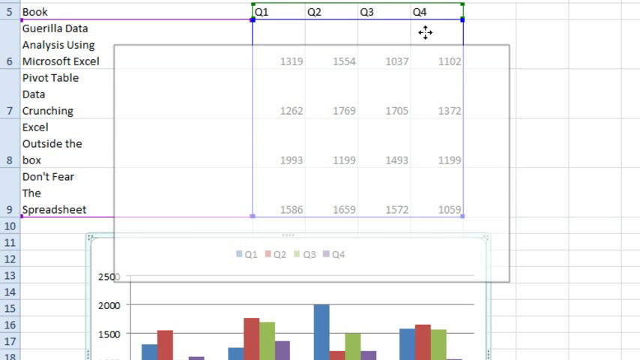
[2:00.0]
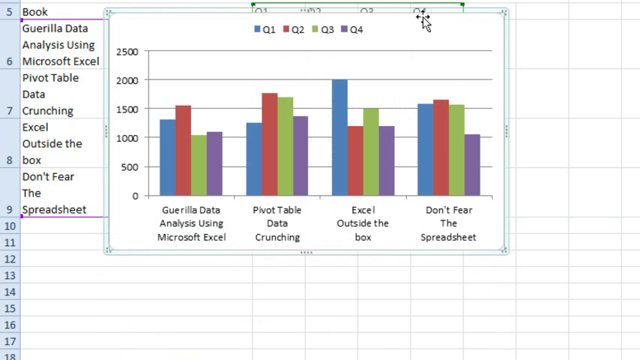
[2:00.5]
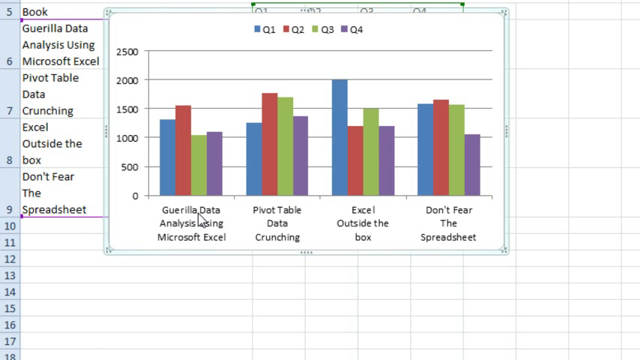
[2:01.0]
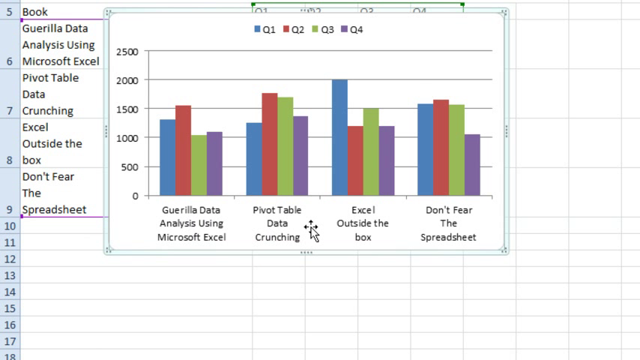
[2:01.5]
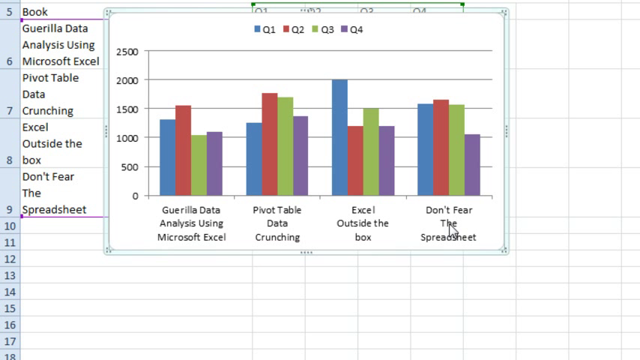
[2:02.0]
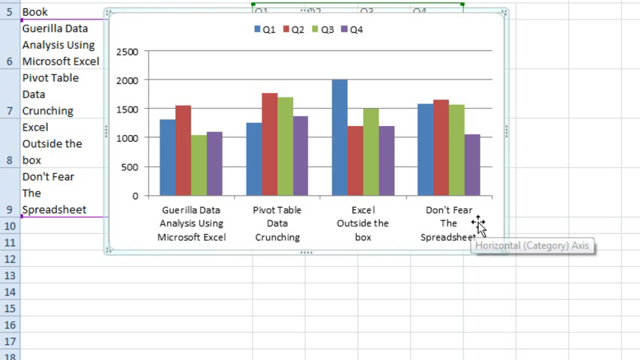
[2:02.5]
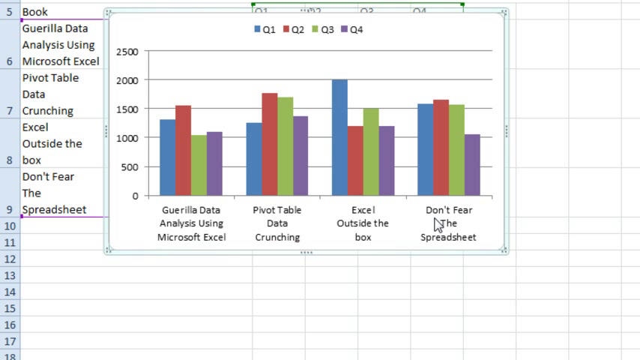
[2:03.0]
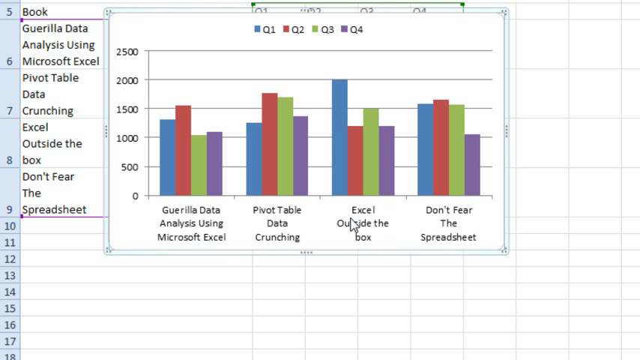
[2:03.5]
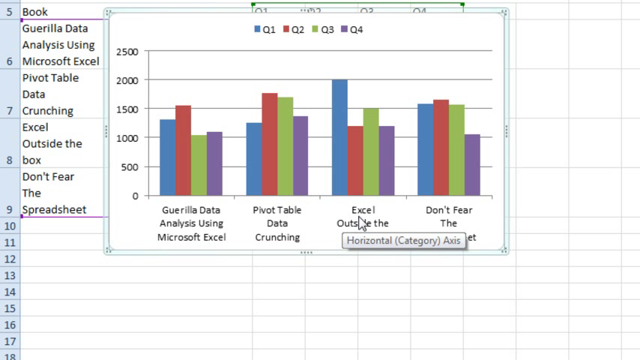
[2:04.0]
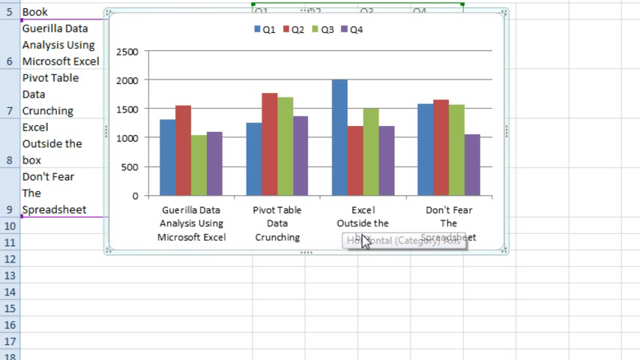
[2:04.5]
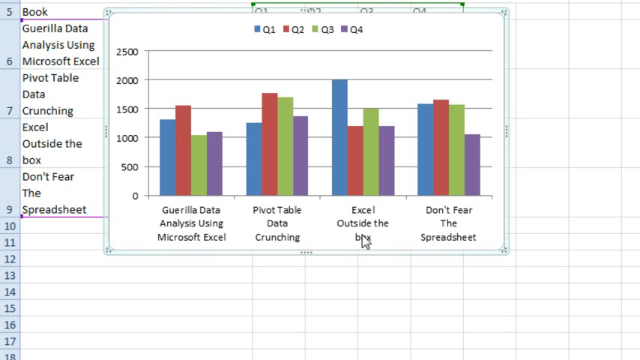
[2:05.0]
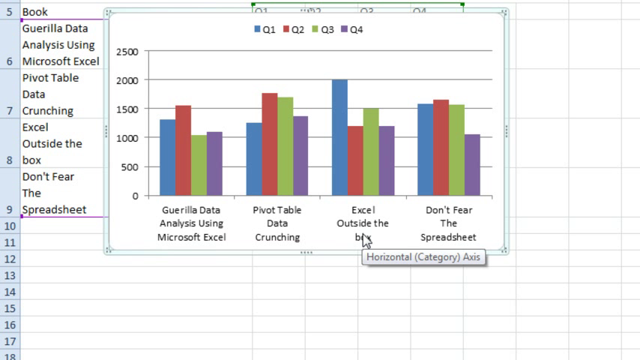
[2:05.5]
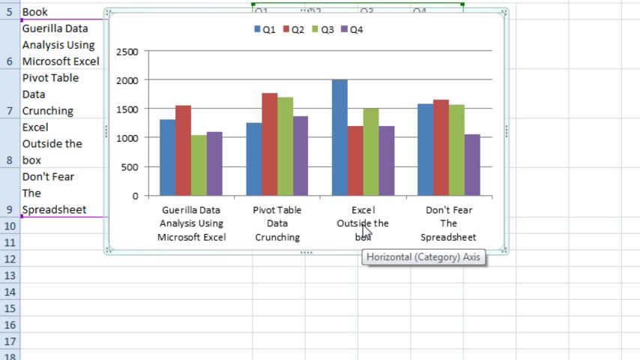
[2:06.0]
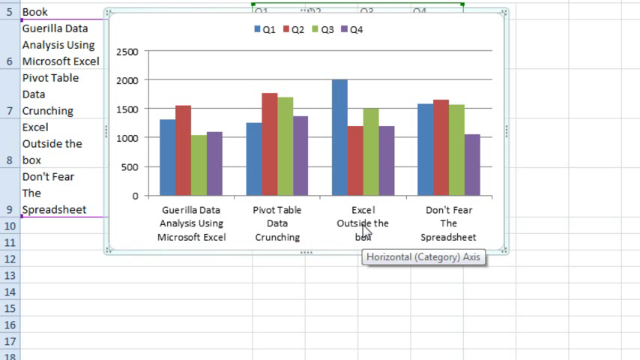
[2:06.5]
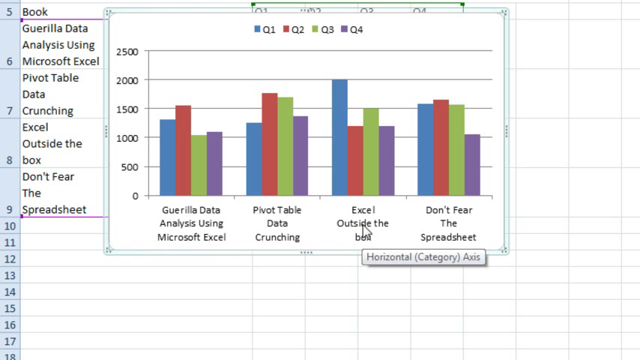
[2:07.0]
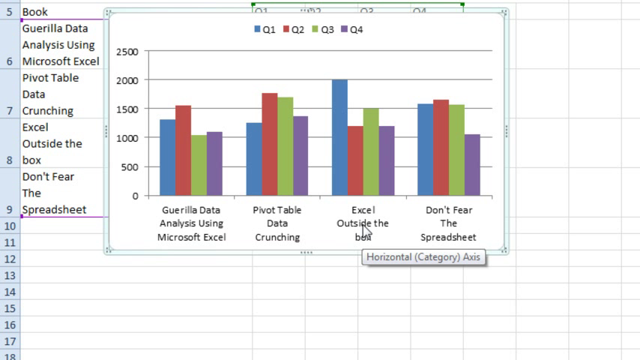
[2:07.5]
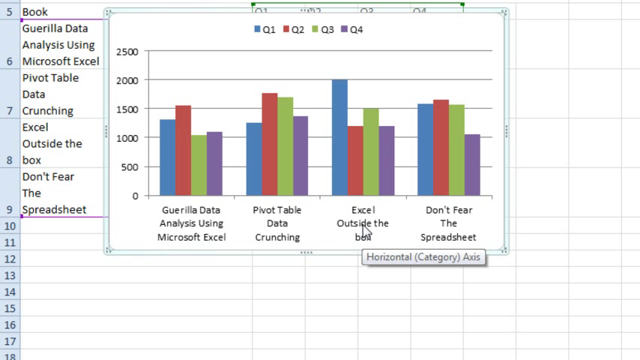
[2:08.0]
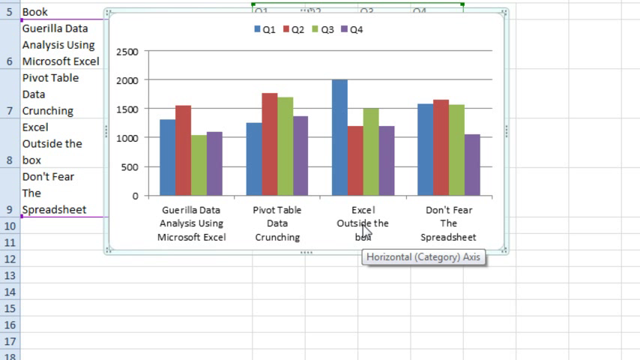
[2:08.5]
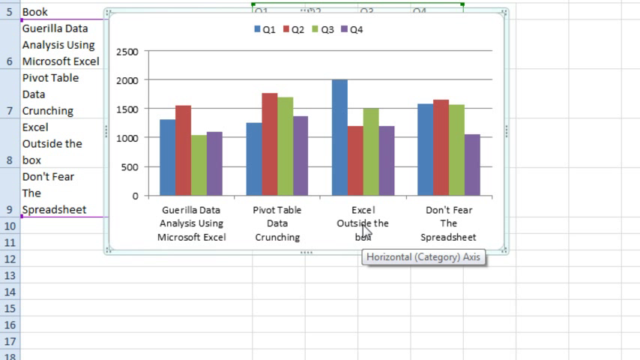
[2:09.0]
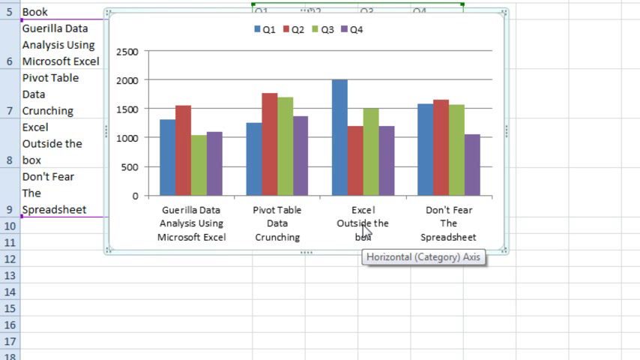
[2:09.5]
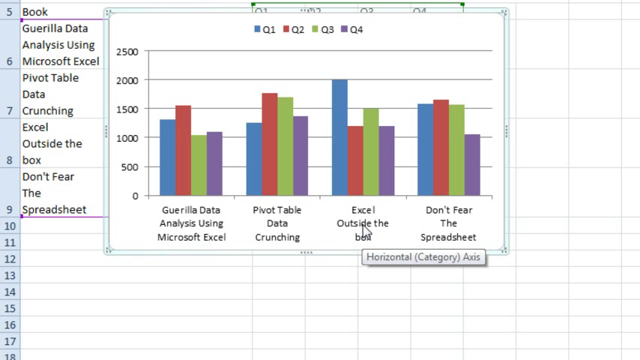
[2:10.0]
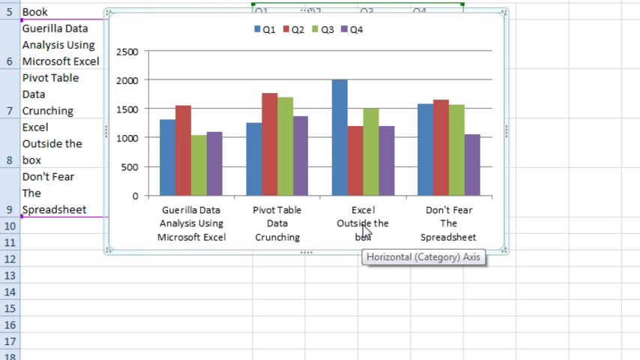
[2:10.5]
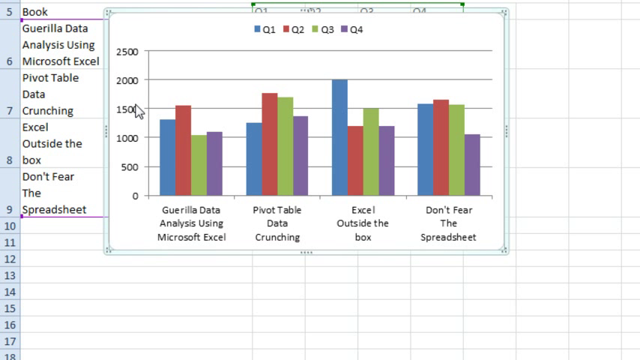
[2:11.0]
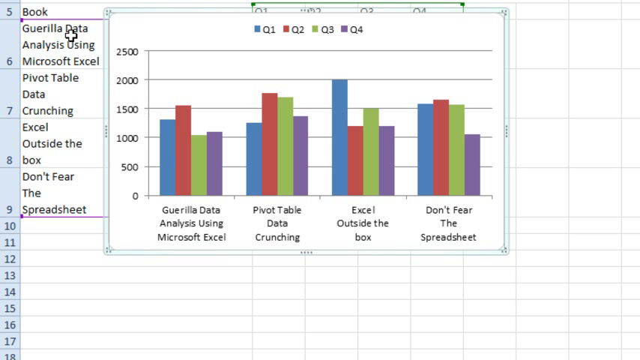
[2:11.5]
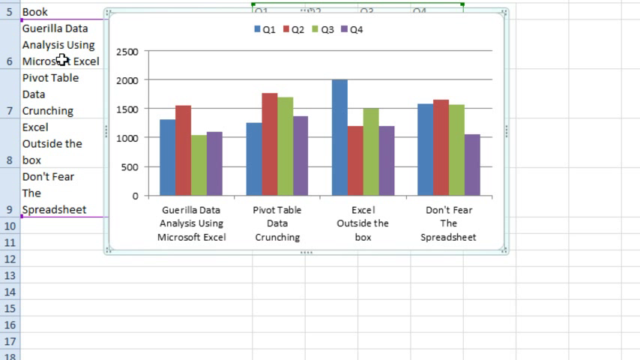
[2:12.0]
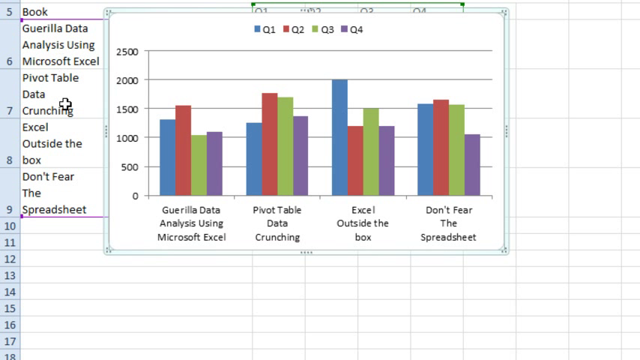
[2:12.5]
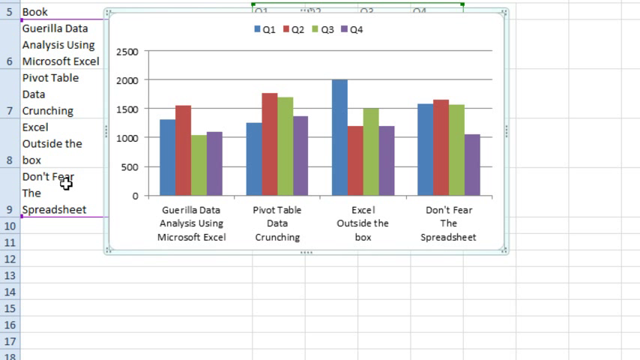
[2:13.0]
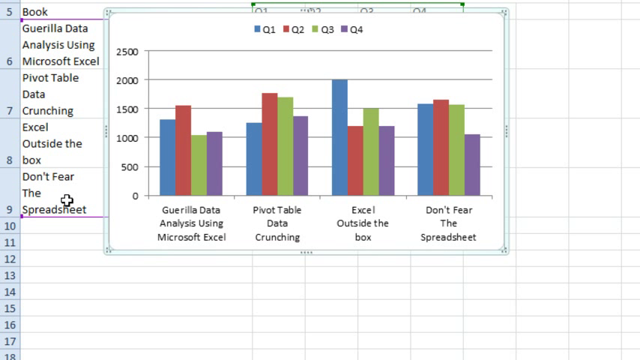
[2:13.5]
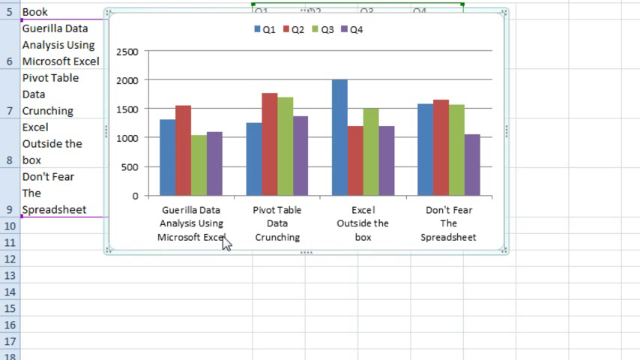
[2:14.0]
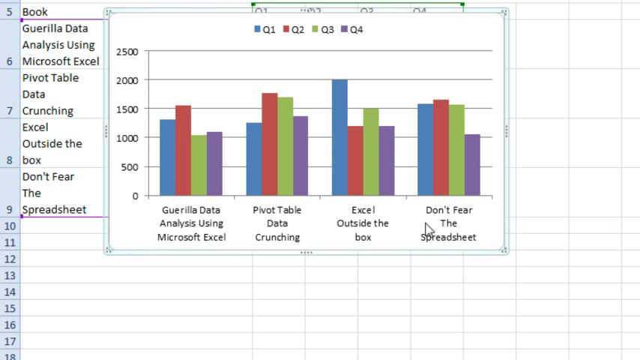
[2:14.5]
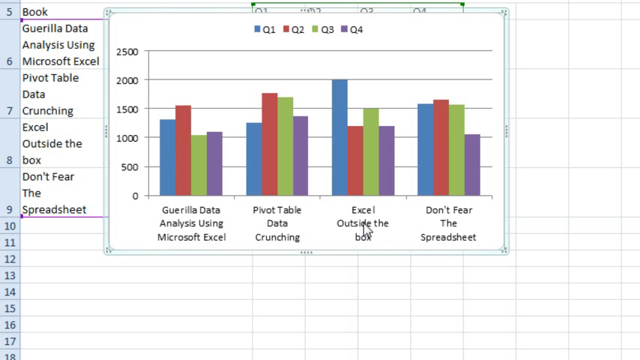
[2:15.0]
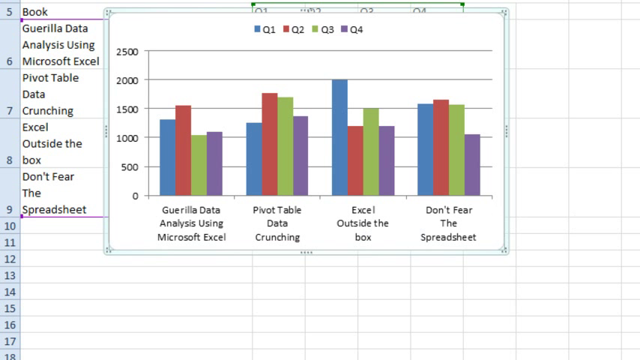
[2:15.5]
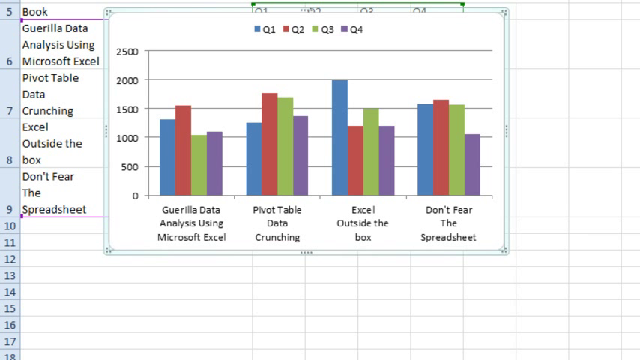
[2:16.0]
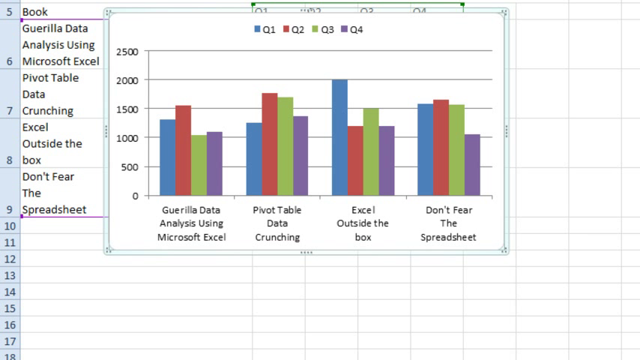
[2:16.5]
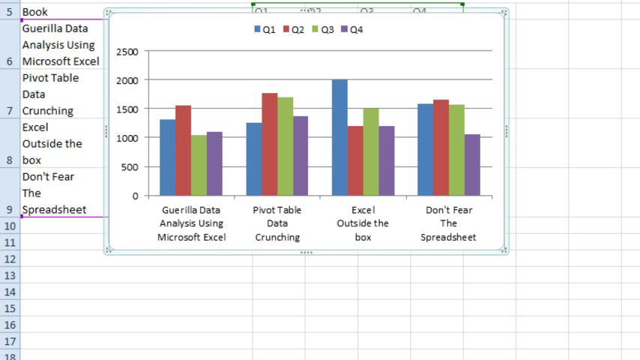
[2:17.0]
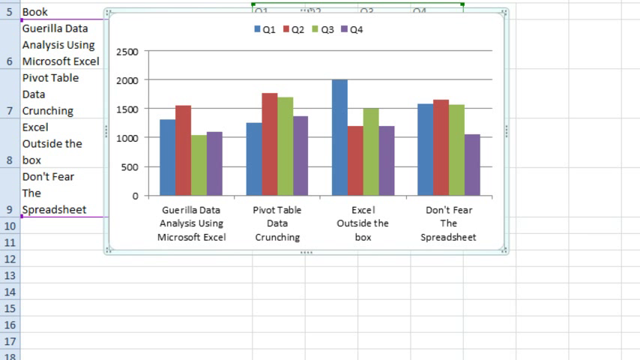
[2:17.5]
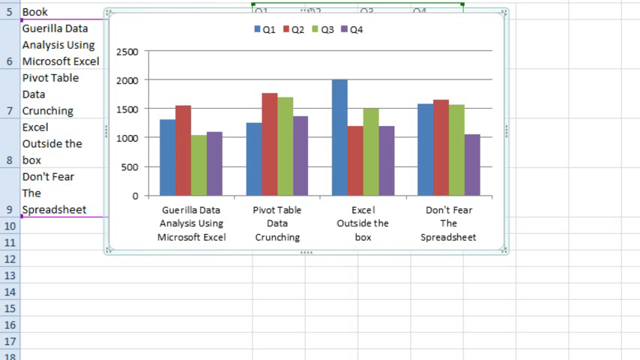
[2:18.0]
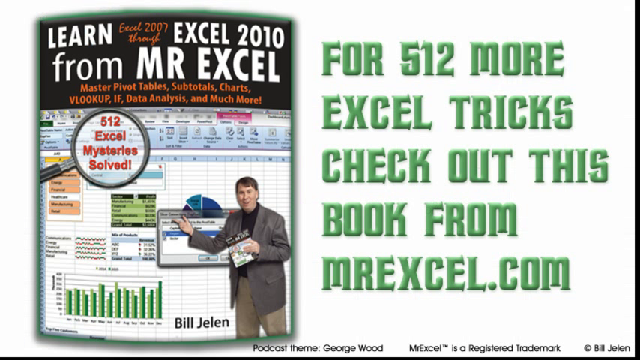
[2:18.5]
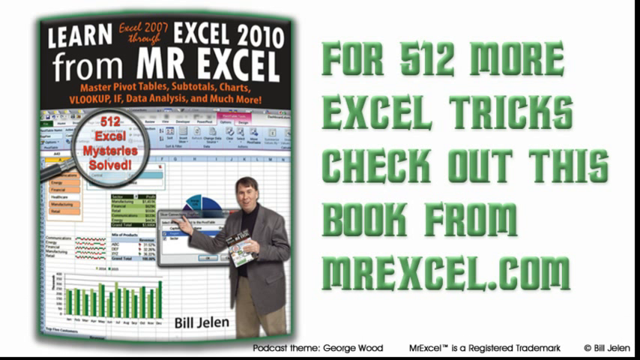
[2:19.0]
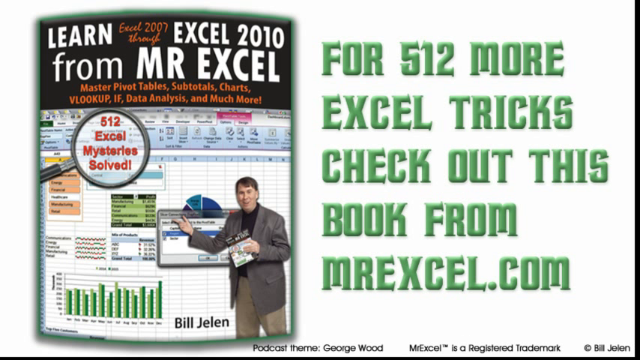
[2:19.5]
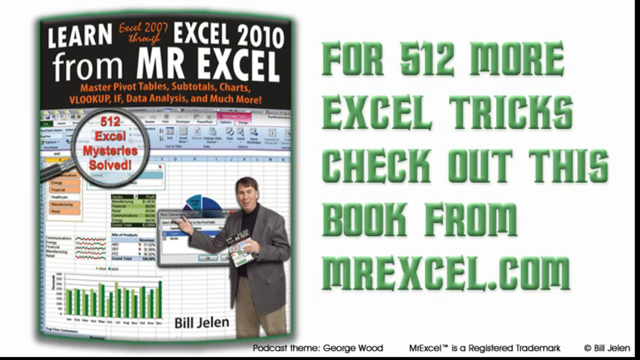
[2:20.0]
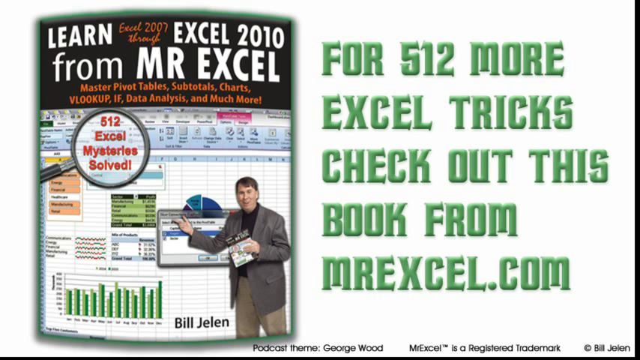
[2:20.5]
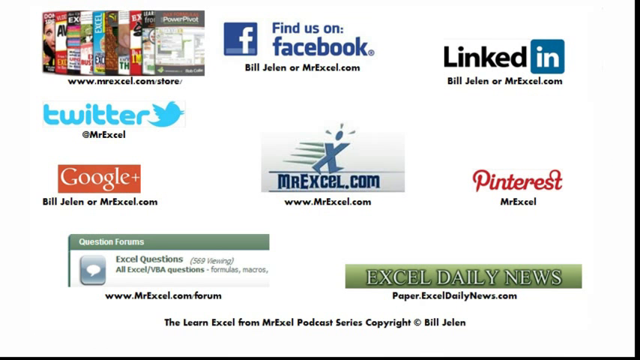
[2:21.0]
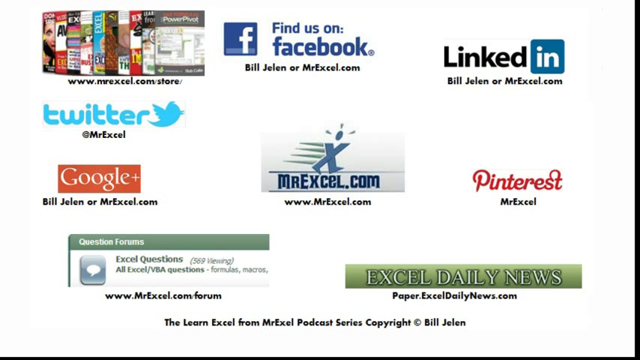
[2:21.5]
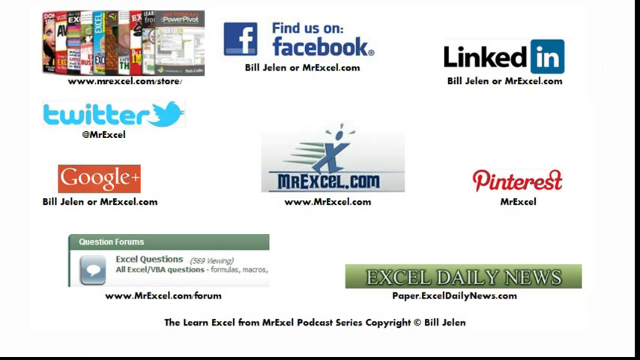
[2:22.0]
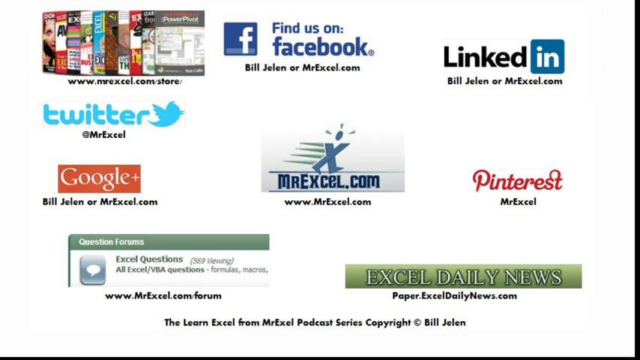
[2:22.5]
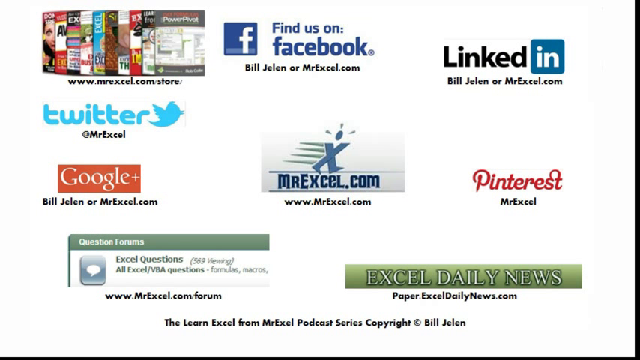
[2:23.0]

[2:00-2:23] Someone records their computer screen with the Microsoft Excel program open. They are dragging a bar graph upwards, covering various columns of information, and slowly mouse over the labels in the bar graph. There are four sections: the first reads "Gorilla Data Analysis using Microsoft Excel", then "PivotTable Data Crunching", then "Excel Outside the Box", and finally the fourth reads "Don't Fear the Spreadsheet". They mouse over the section reading "Excel Outside the Box", then over rows 6 to 9 in column A of the spreadsheet, and then back over the labels in the bar graph. Finally, an outro slide appears. On the left is a photo of a man standing in front of an Excel spreadsheet, made to look like a book cover that reads "Learn Excel 2007, Excel 2010 from MrExcel". On the right, on a white background, it reads "For 512 more Excel tricks, check out this book from MrExcel.com."